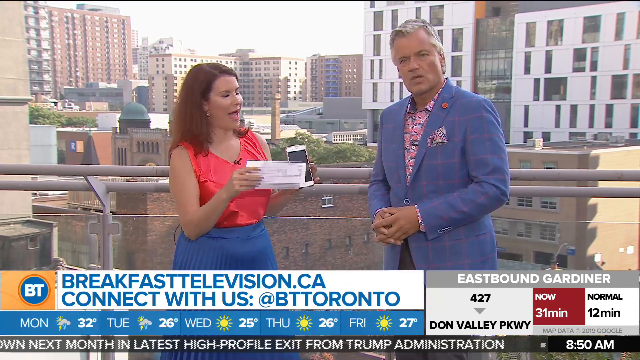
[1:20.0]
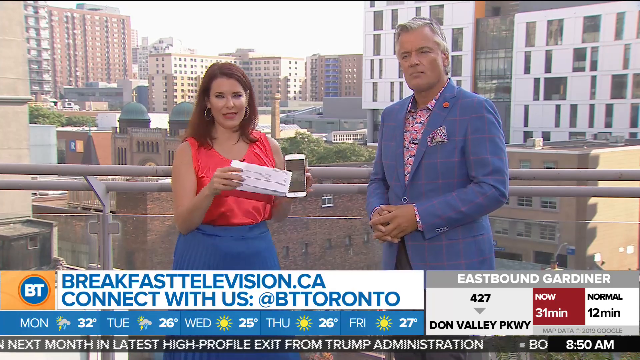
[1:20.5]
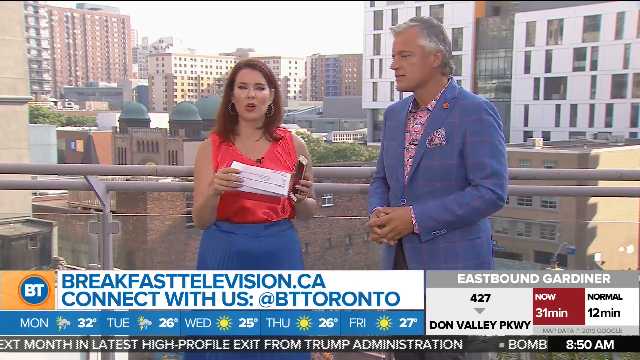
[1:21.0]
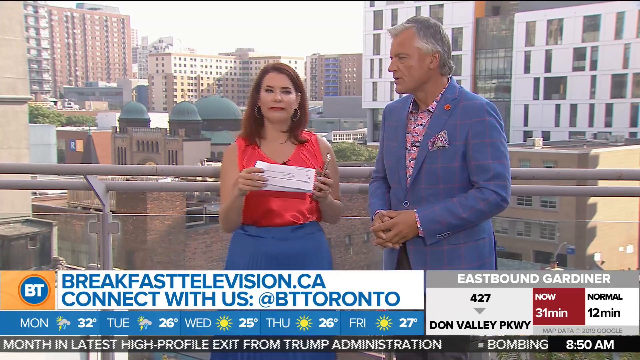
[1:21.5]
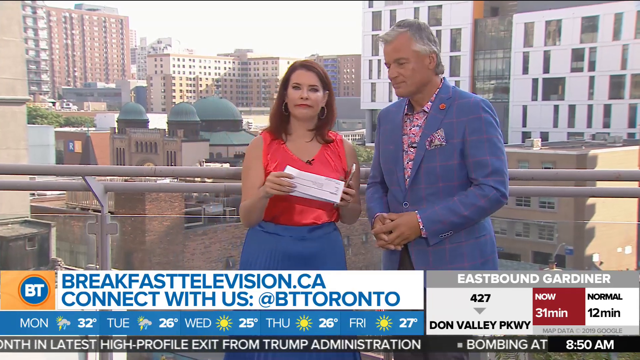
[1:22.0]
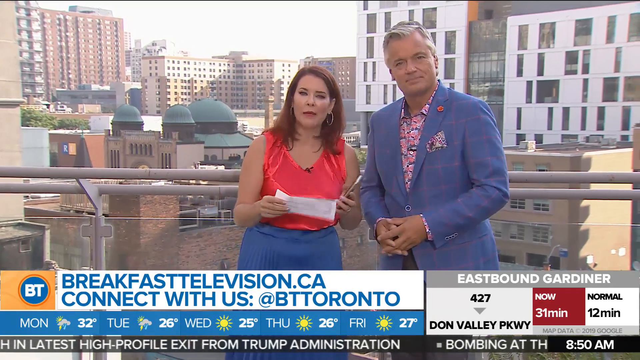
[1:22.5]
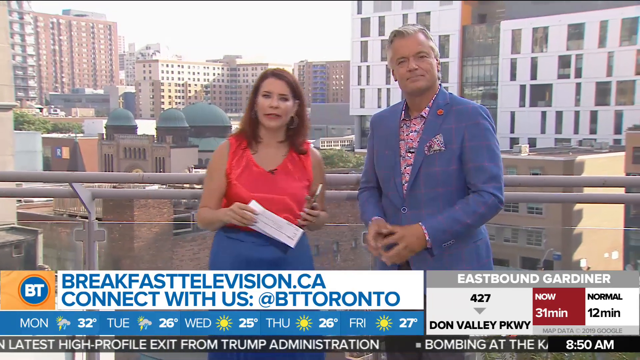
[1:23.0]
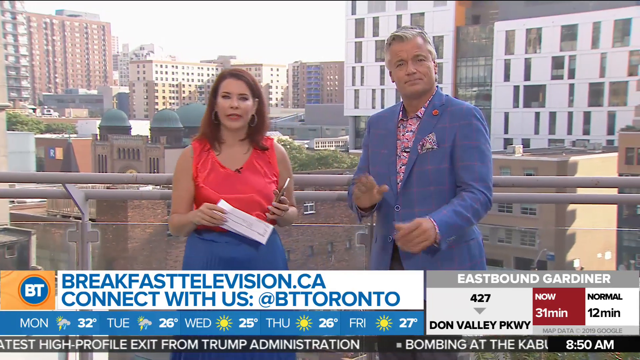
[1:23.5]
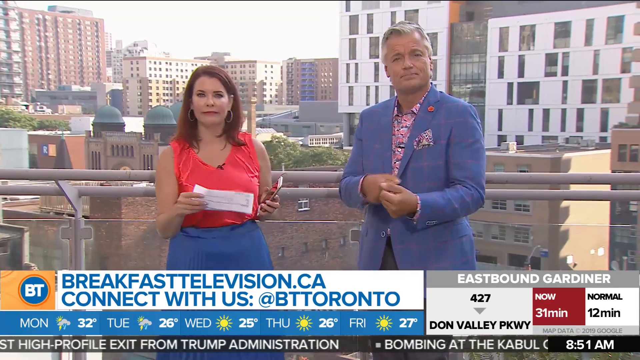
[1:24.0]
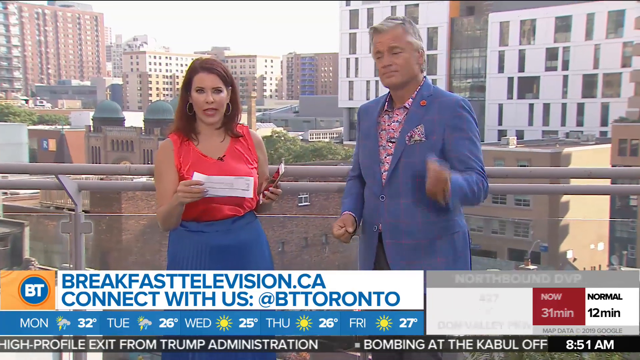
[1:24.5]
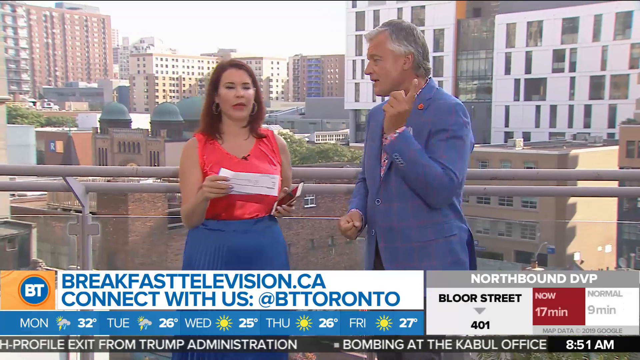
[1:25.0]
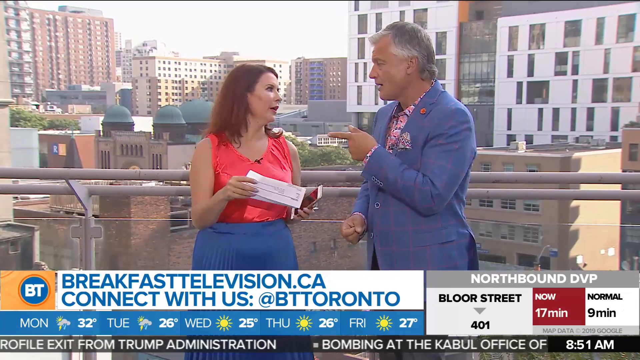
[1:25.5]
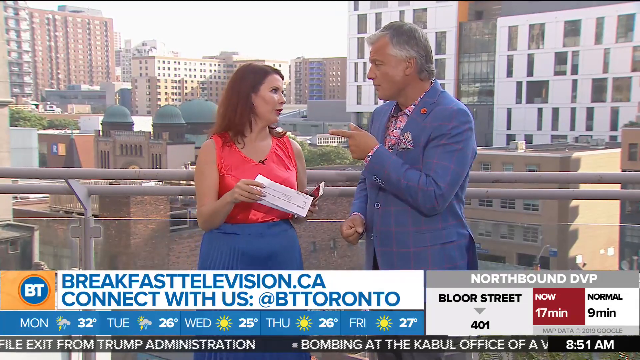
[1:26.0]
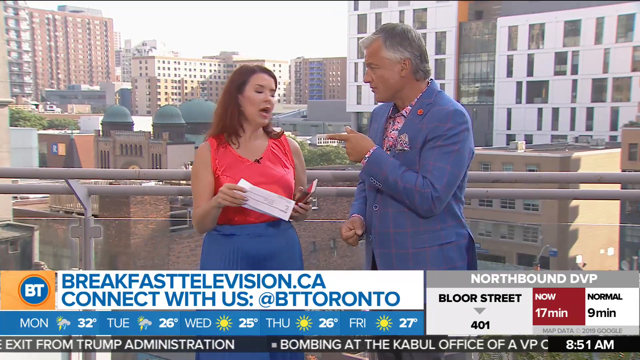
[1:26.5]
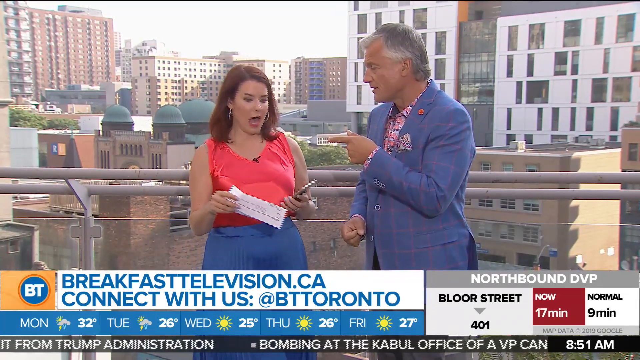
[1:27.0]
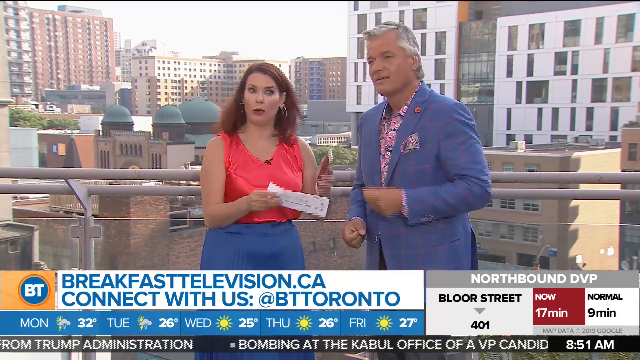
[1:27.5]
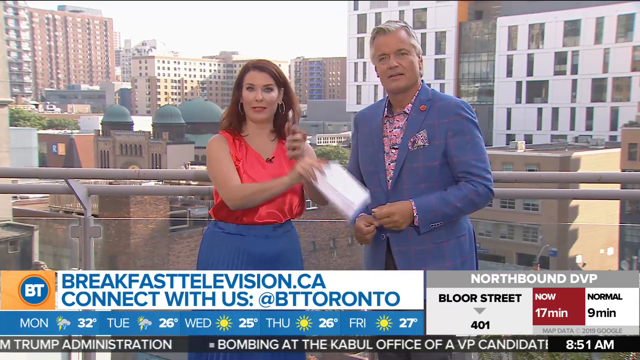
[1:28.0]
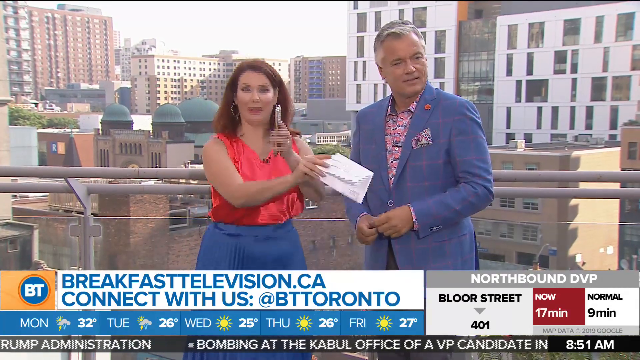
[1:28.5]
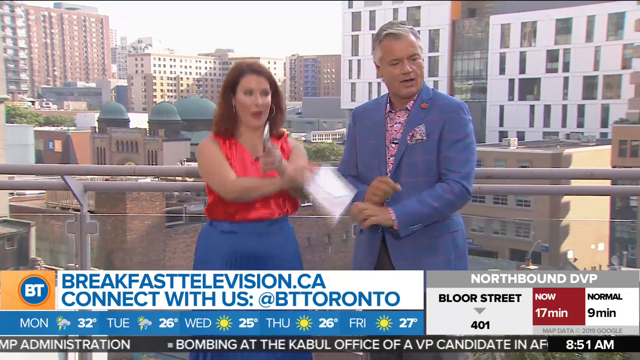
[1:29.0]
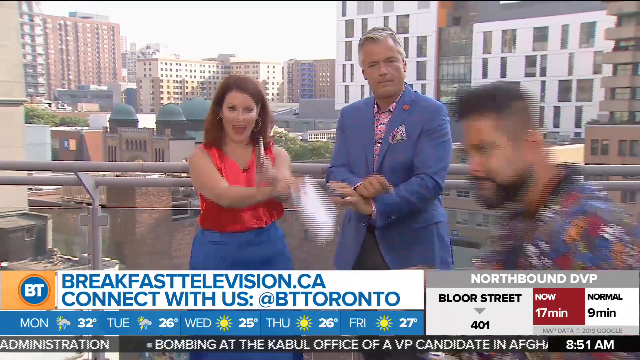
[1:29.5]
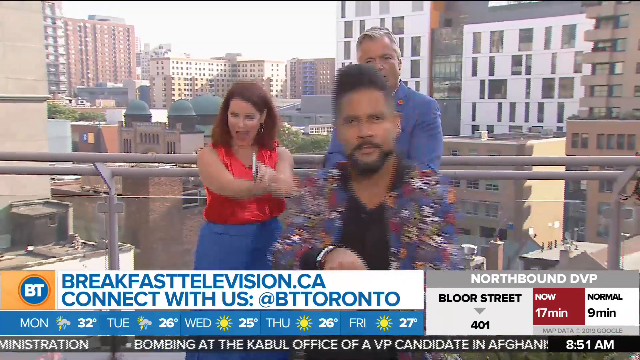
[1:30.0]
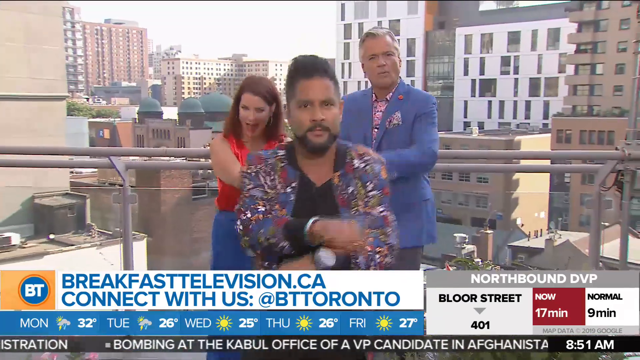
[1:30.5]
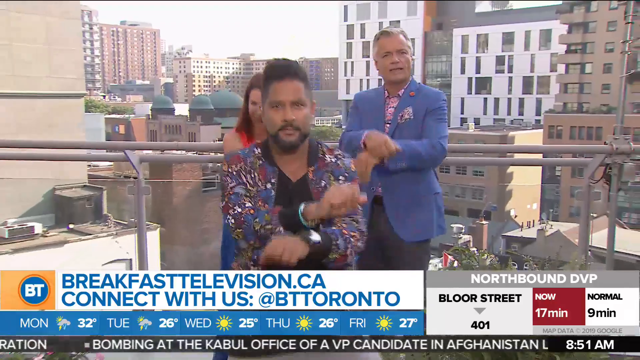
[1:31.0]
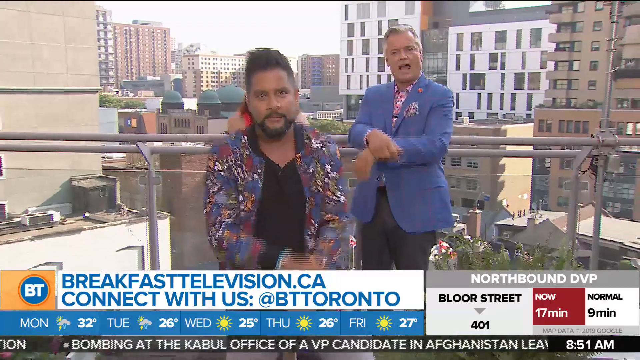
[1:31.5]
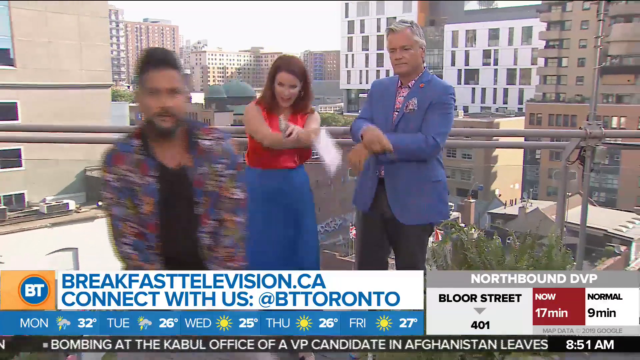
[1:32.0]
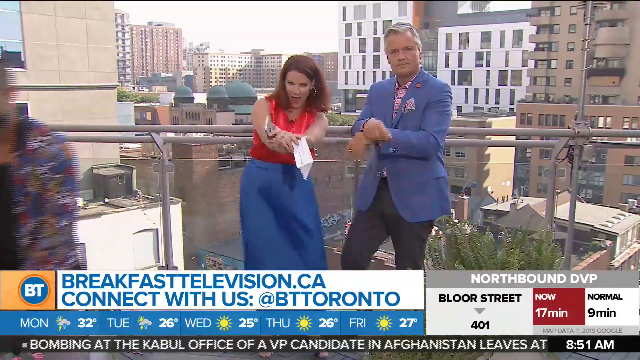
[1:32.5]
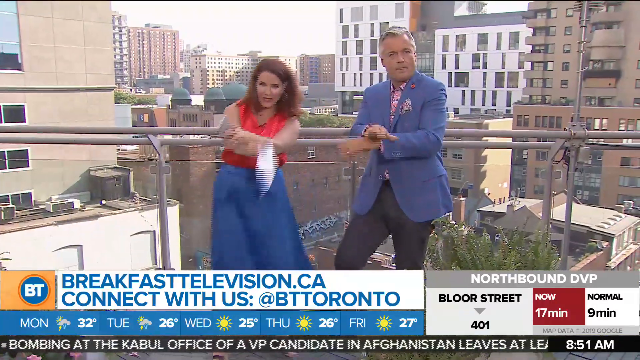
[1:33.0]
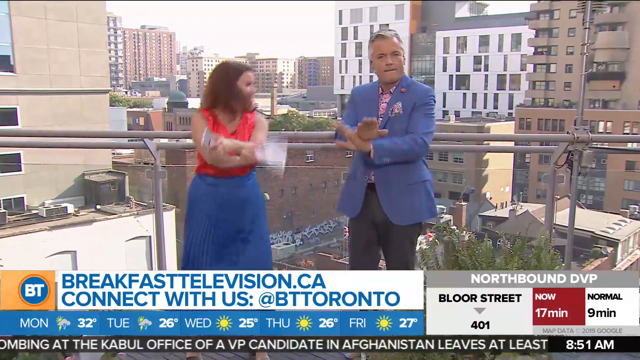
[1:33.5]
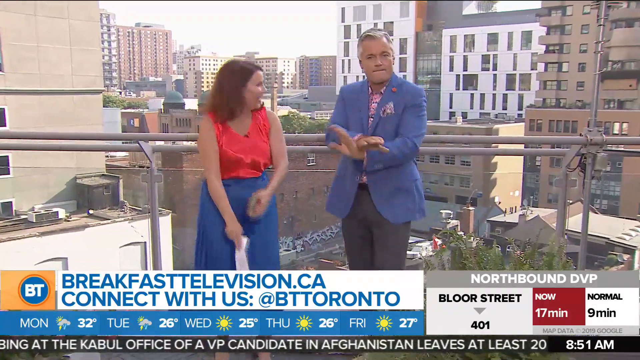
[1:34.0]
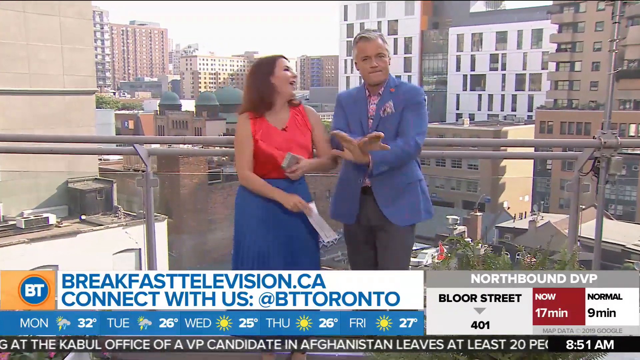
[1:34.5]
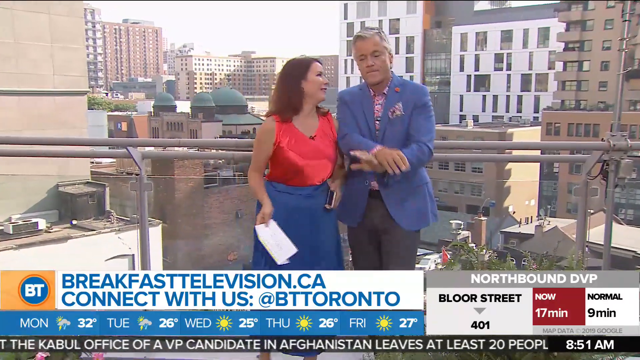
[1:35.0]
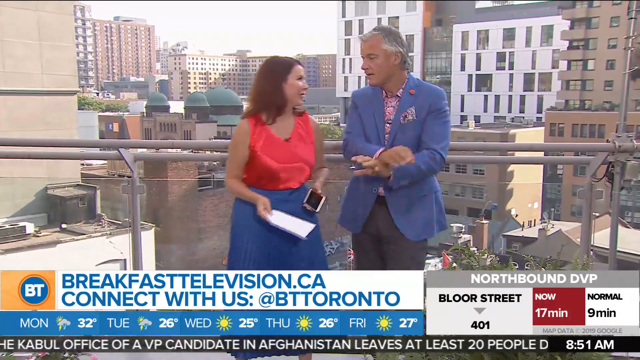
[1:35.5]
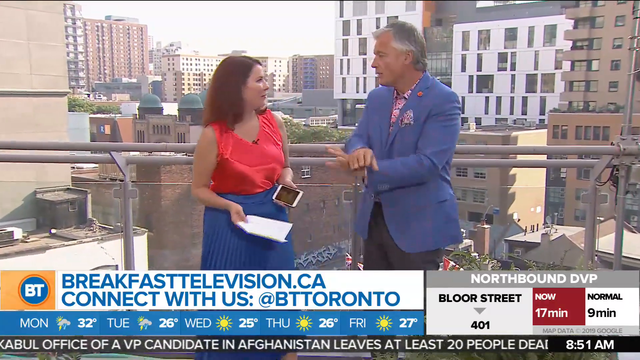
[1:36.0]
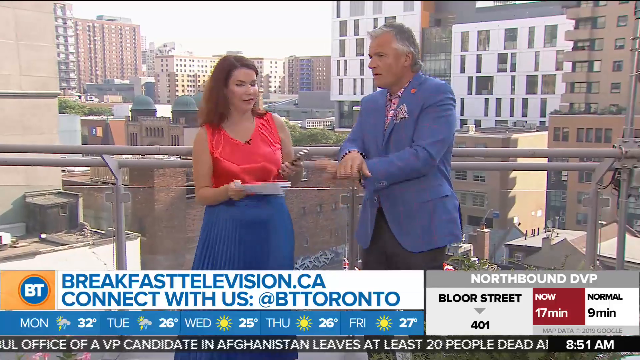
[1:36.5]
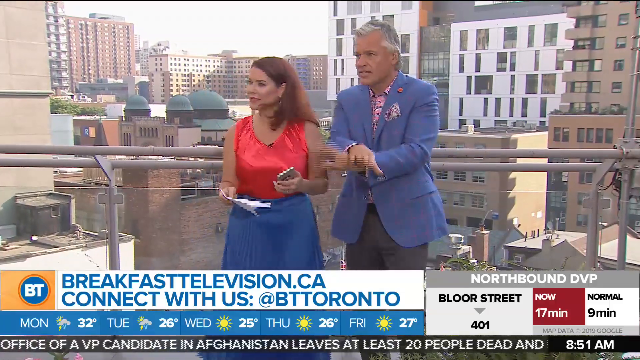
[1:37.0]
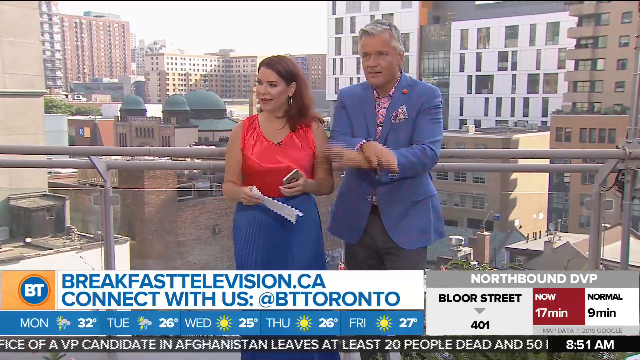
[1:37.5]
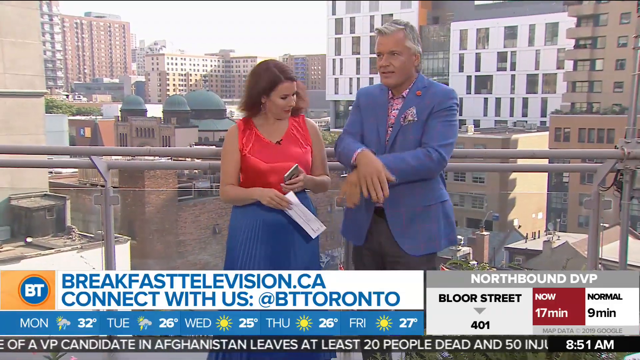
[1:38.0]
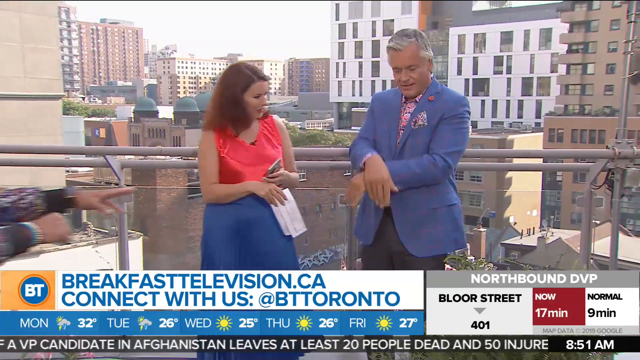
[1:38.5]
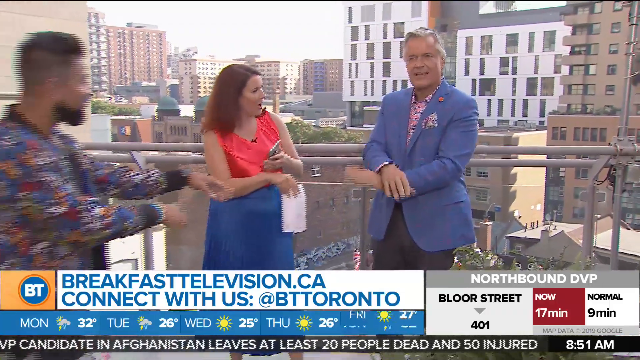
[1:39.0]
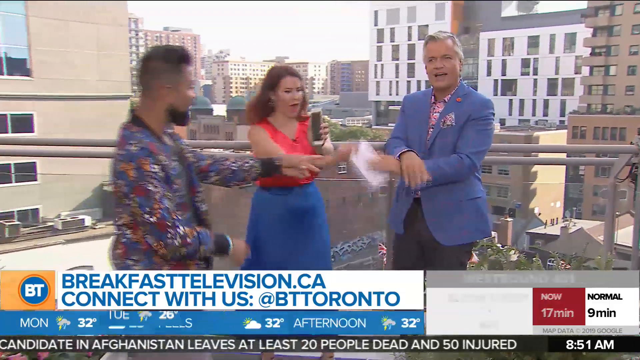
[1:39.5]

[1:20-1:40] The two hosts talk to the audience and to each other and continue to dance, doing a dance quite similar to Gangnam Style. As they dance, the camera pans out slightly and a third person enters the frame, dances in front of them while looking at the camera, and then runs out of shot while the hosts keep dancing and laughing. The third man then comes back into the frame and starts talking with the hosts. The ticker at the bottom of the screen stays the same, except that the street and road names in the traffic information change.